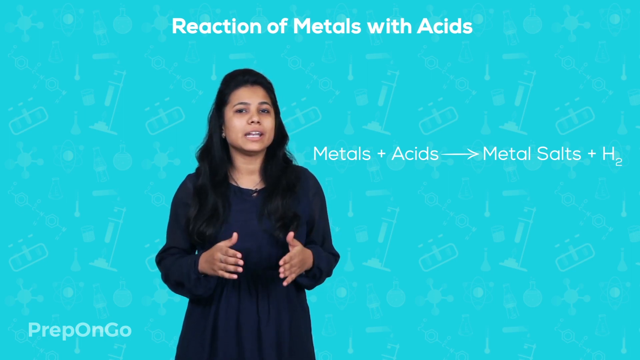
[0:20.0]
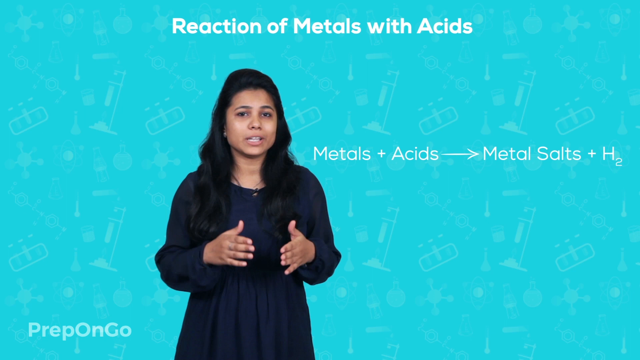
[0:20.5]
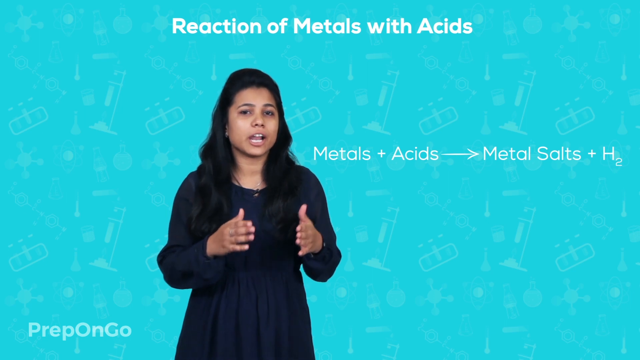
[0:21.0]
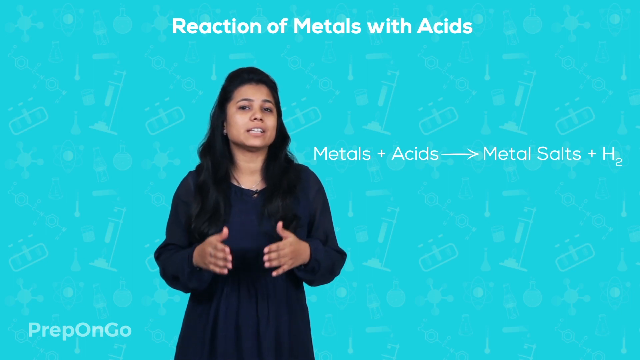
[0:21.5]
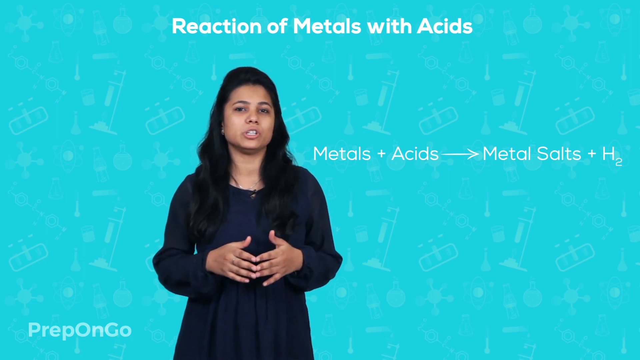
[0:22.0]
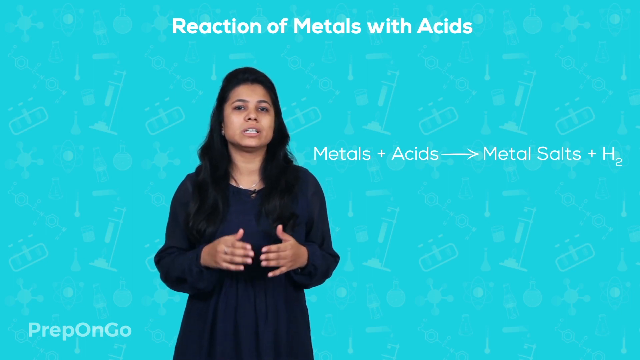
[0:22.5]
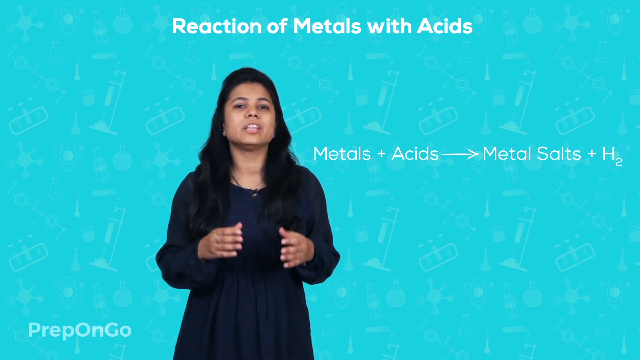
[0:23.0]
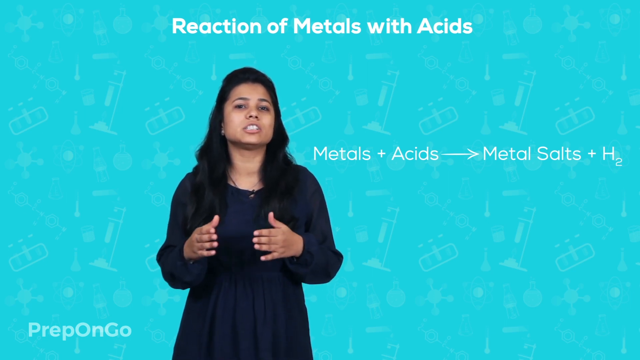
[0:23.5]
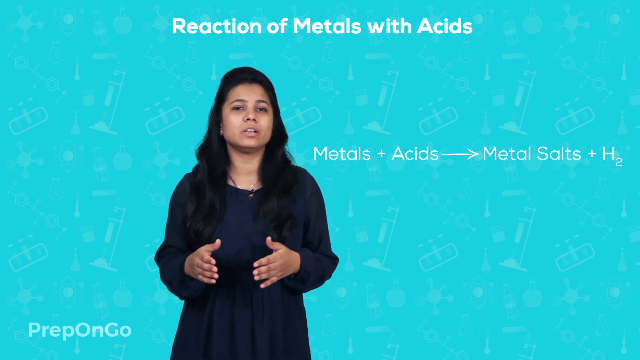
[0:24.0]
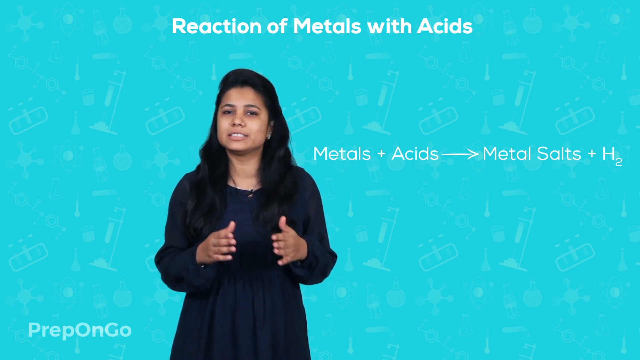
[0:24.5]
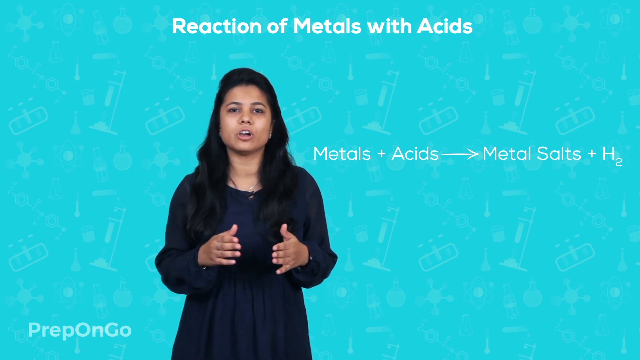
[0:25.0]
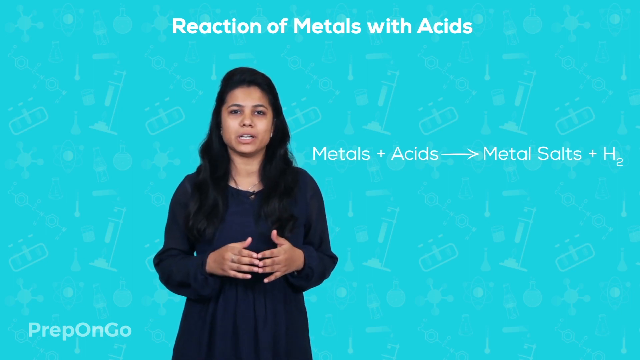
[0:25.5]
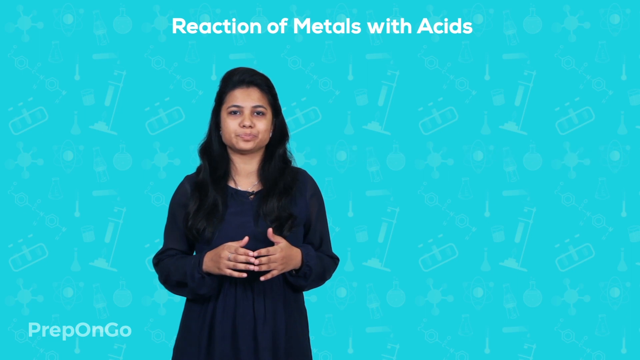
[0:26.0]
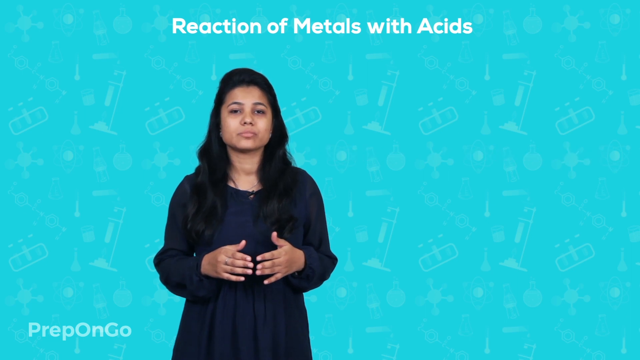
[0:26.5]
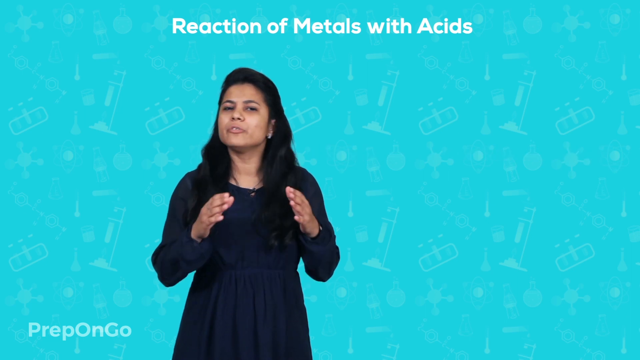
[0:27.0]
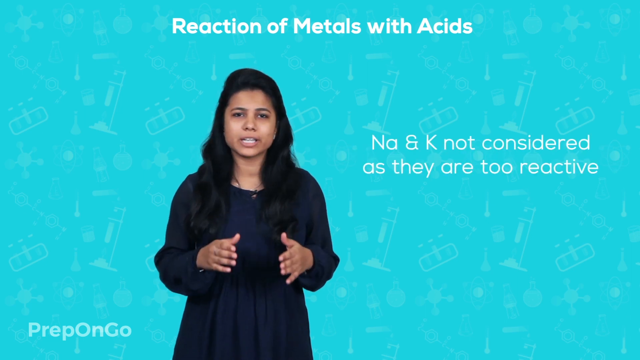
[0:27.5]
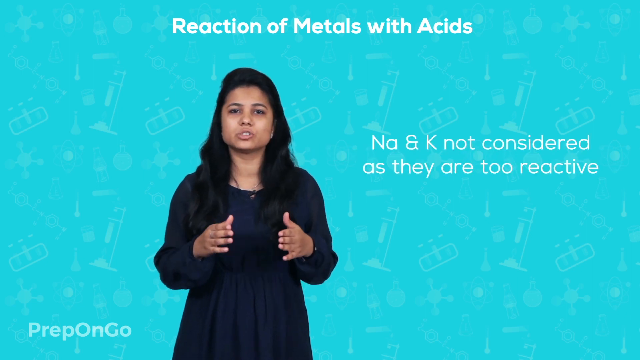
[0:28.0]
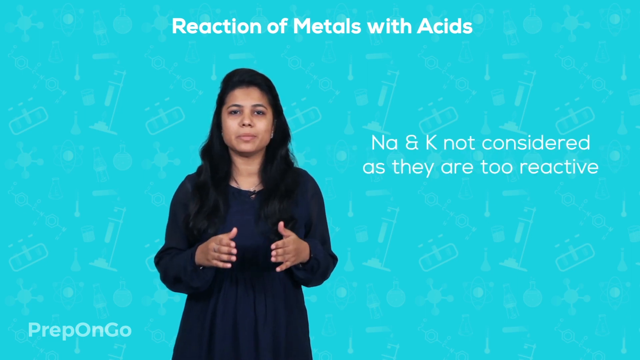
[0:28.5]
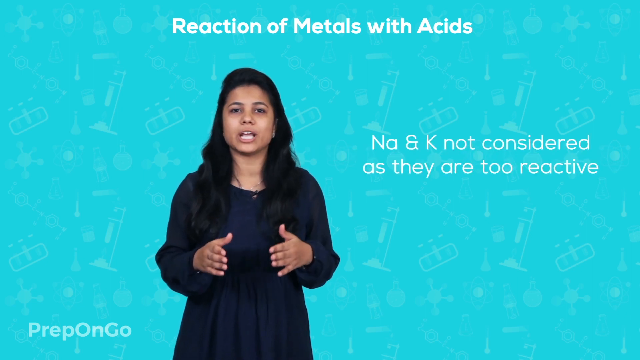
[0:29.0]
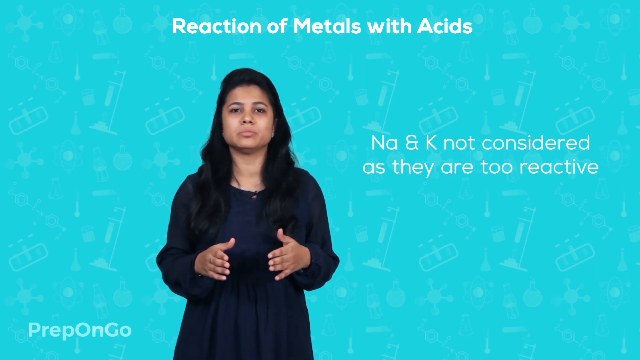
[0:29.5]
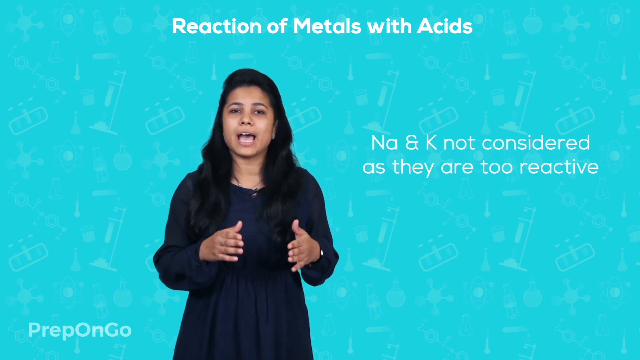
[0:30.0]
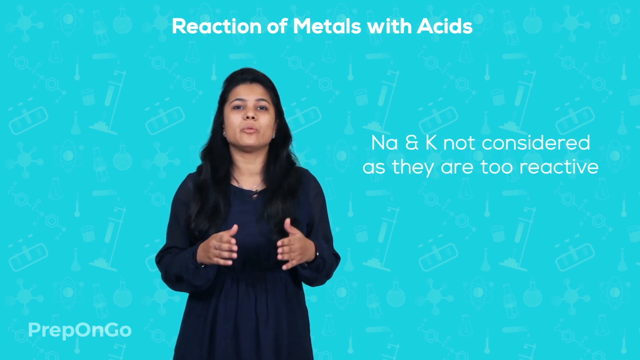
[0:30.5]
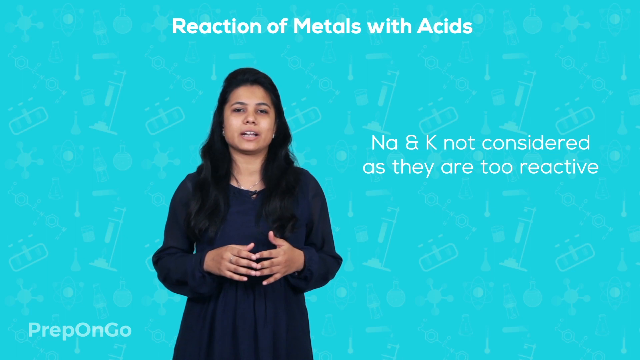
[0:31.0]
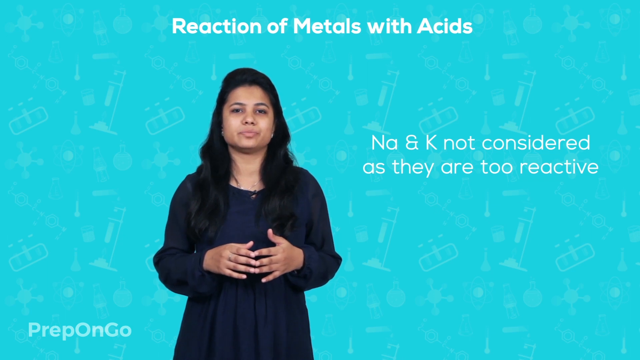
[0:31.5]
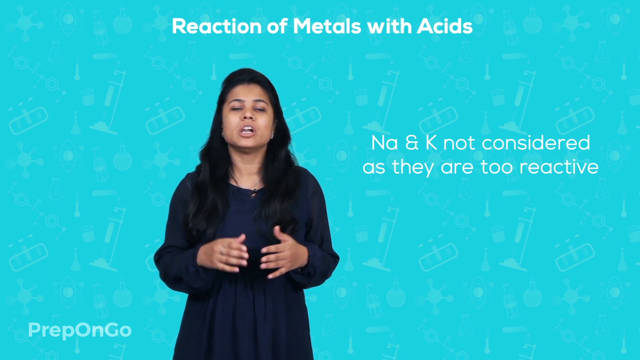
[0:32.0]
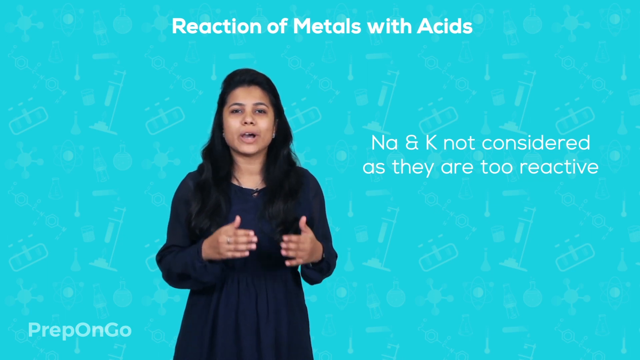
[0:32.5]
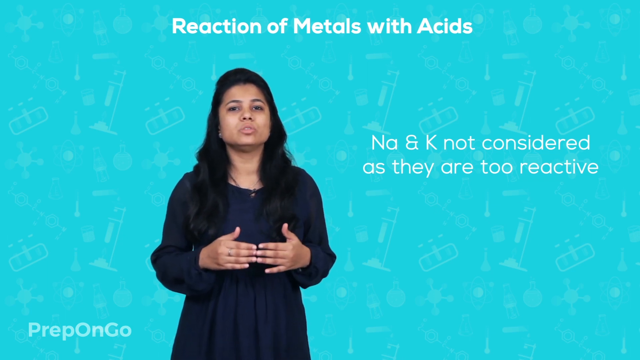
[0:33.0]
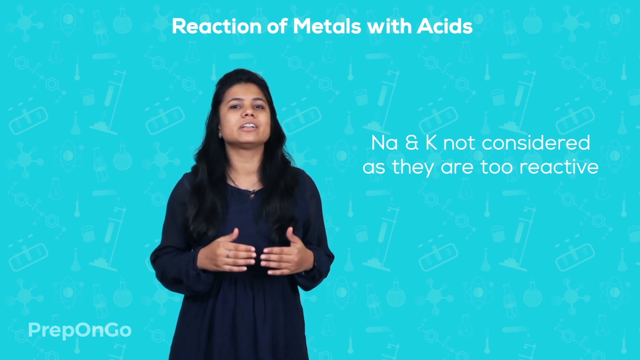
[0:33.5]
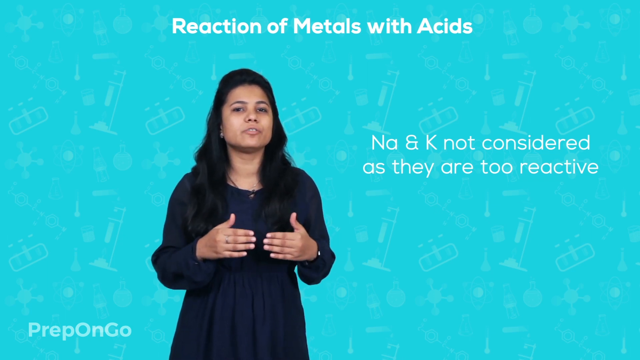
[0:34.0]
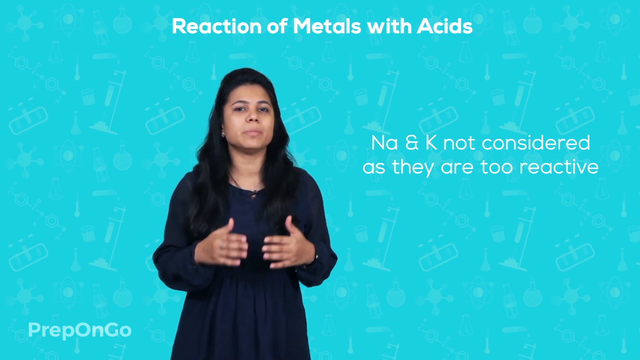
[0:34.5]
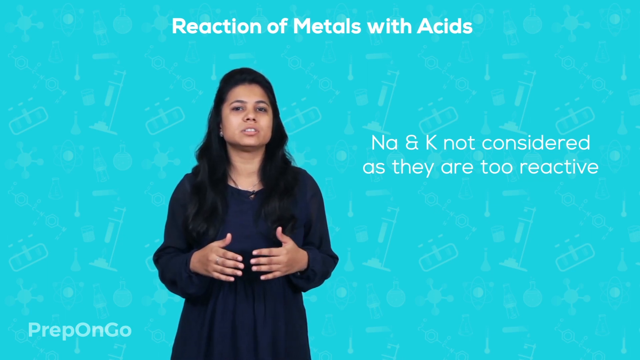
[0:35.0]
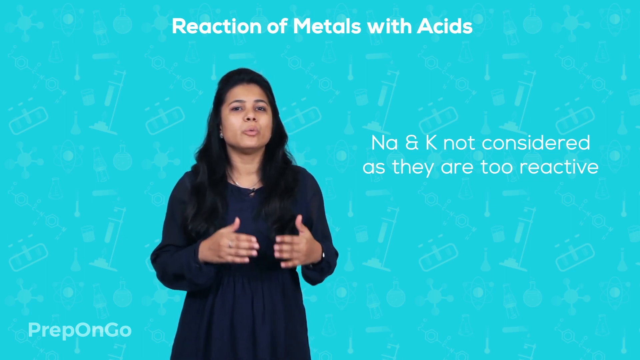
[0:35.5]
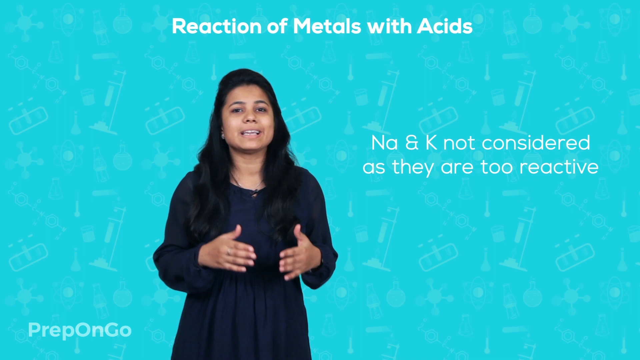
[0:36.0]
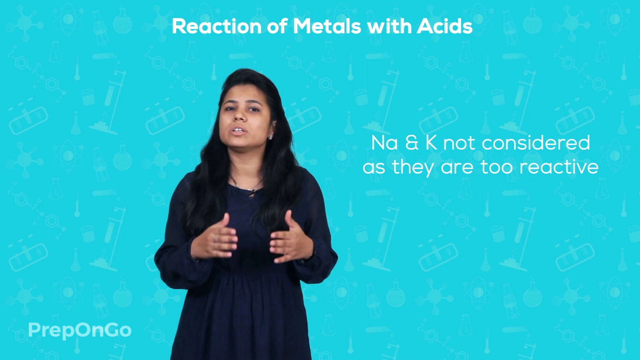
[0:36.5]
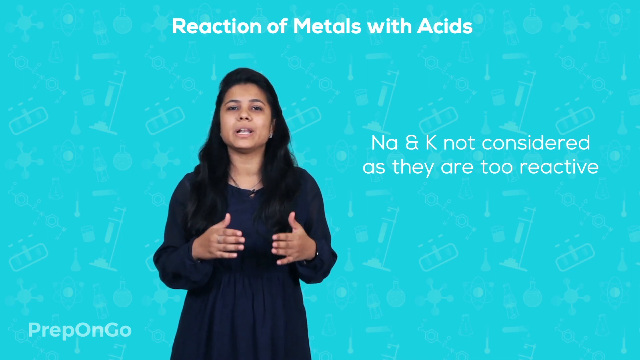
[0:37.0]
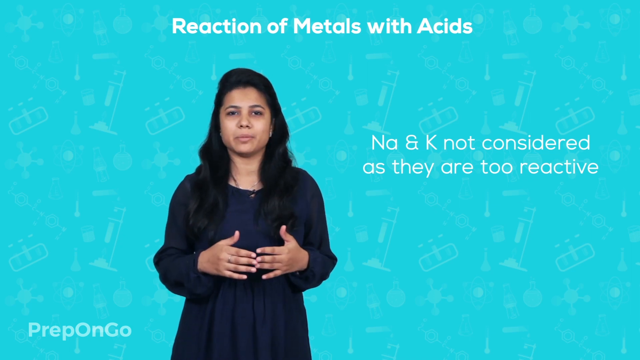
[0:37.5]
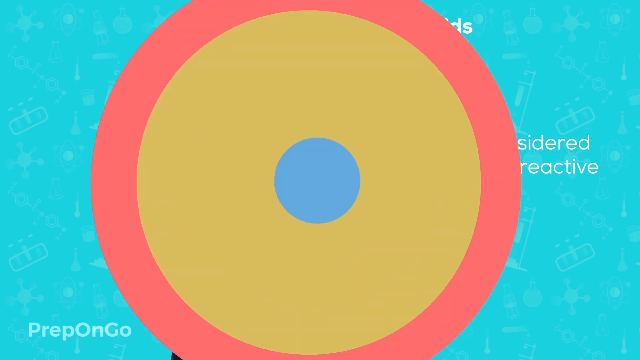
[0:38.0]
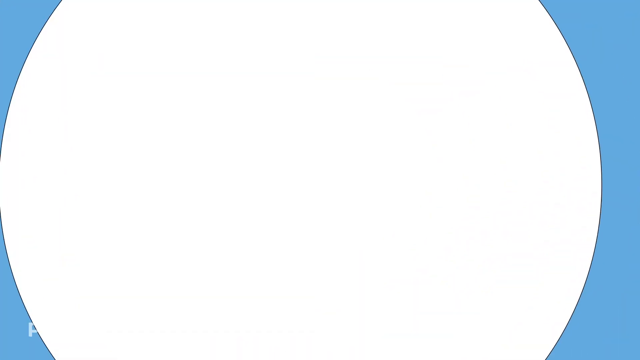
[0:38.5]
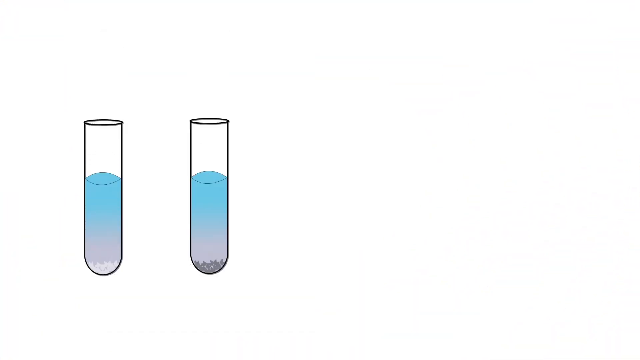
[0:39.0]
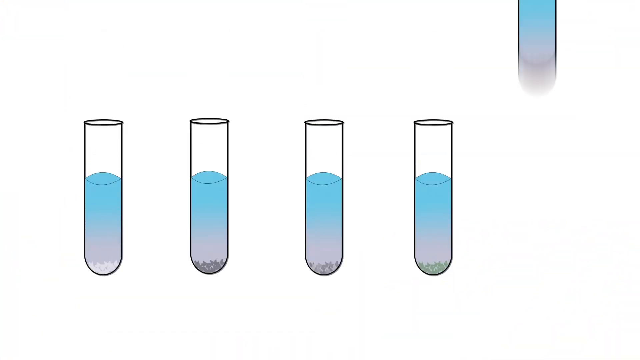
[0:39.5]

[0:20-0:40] The text to the host's right disappears and is replaced by a new line that reads Na and K, for sodium and potassium, "not considered as they are too reactive". The video then cuts to a transition of concentric circles of different widths and colors, and then to a cartoon of five test tubes with solutions inside. All of the test tubes are half full, and all five have solid particles at the bottom. The substance at the bottom of the first test tube on the left is white, and the substances gradually become darker toward the right.